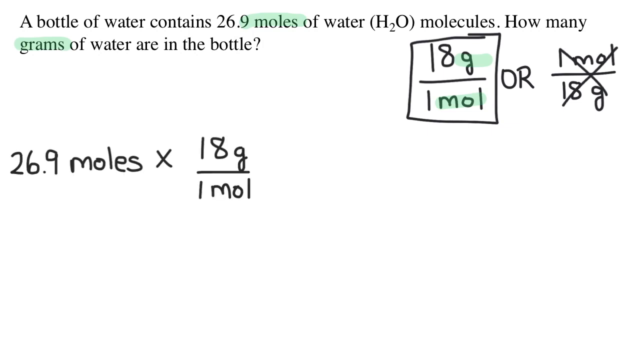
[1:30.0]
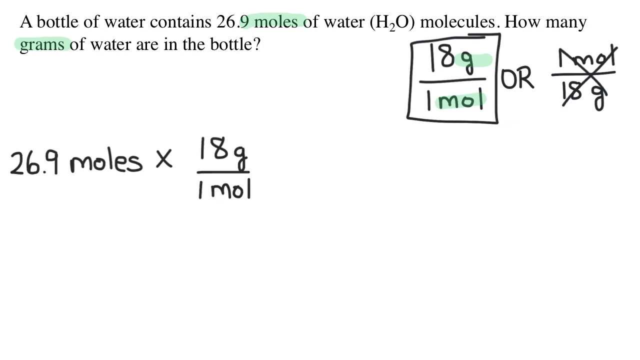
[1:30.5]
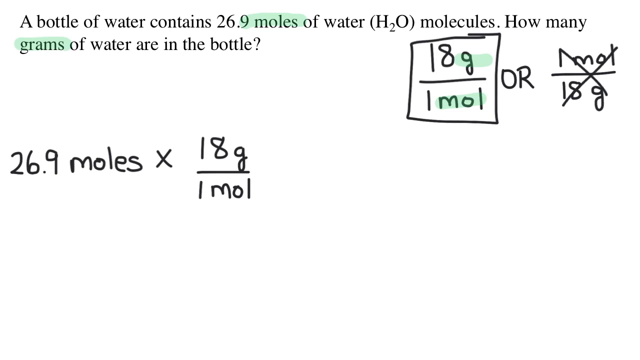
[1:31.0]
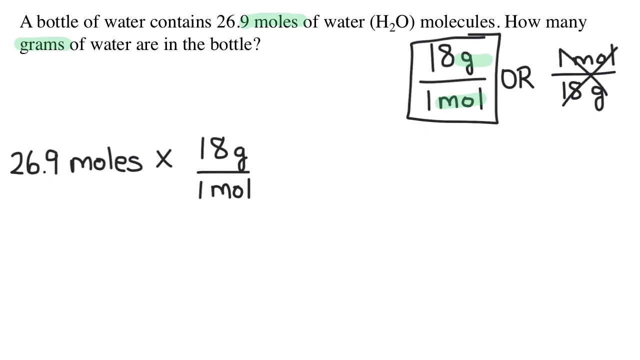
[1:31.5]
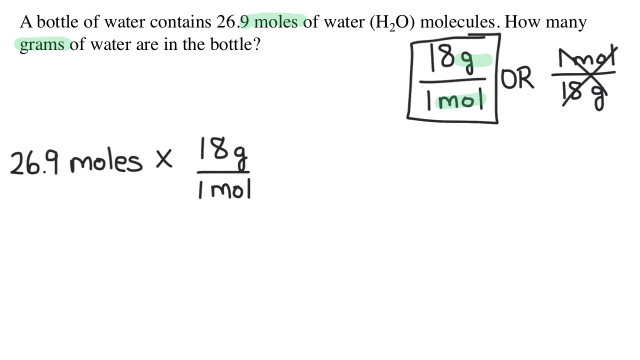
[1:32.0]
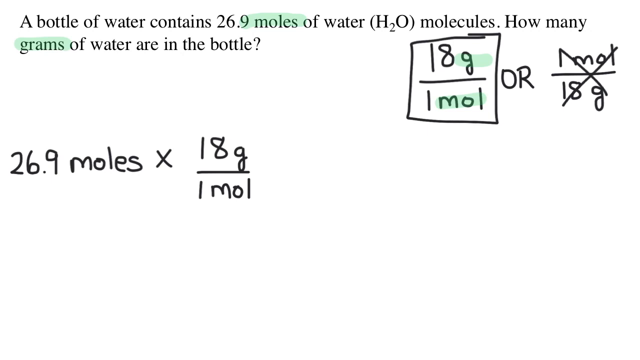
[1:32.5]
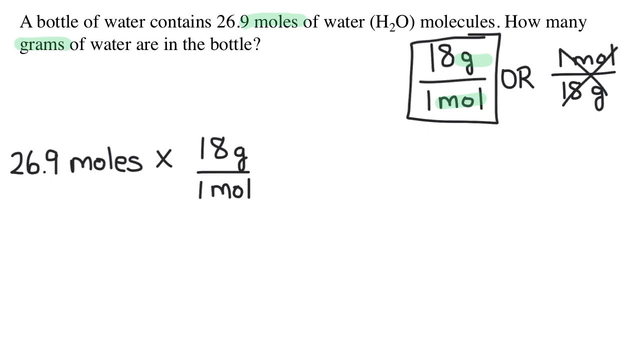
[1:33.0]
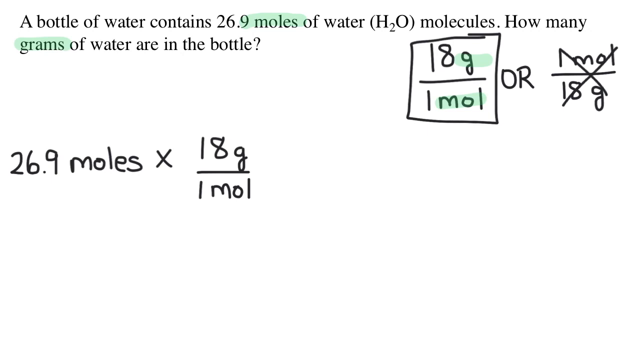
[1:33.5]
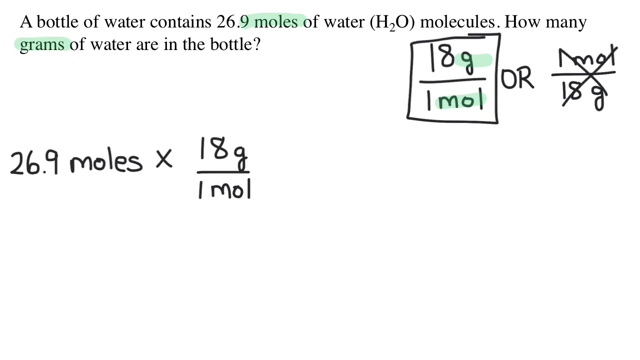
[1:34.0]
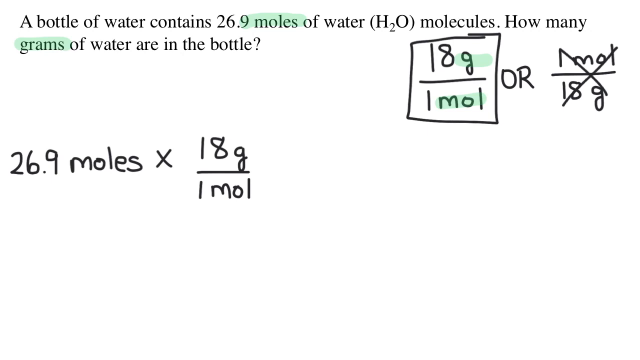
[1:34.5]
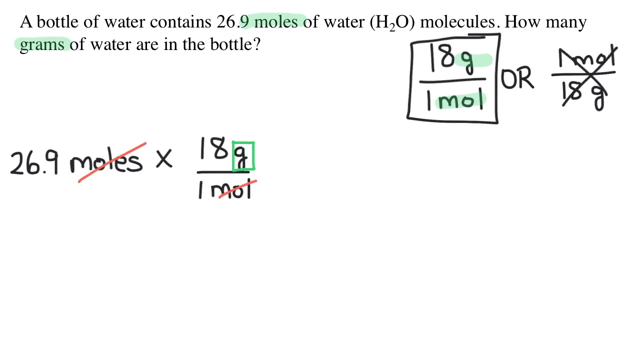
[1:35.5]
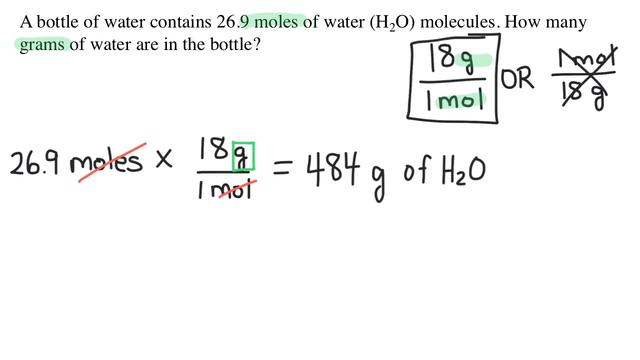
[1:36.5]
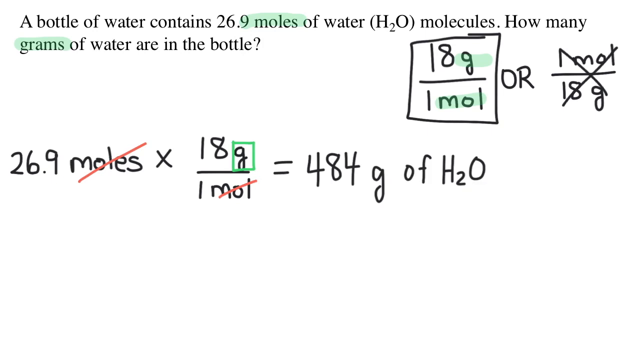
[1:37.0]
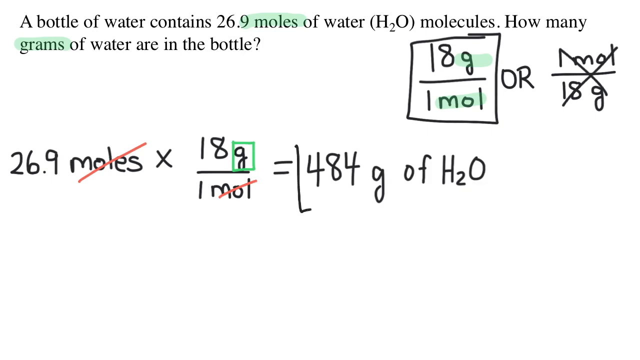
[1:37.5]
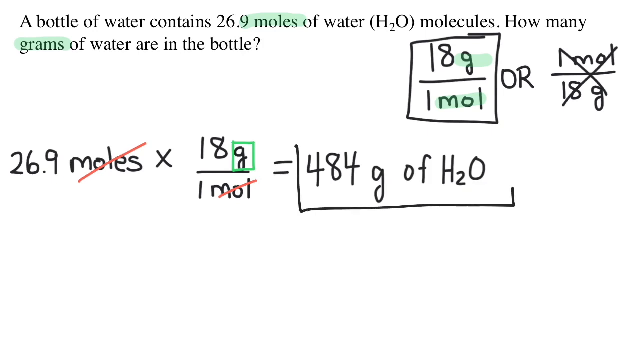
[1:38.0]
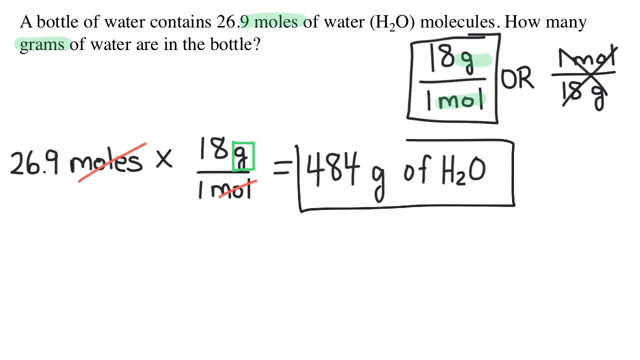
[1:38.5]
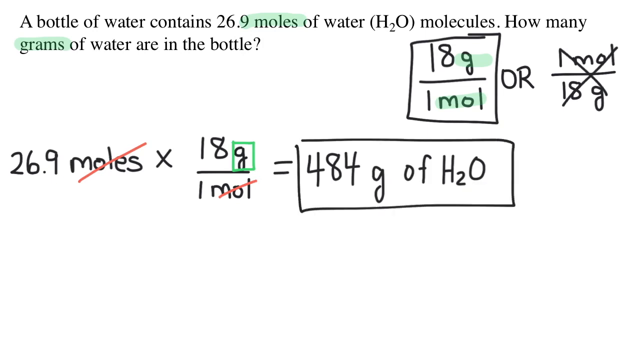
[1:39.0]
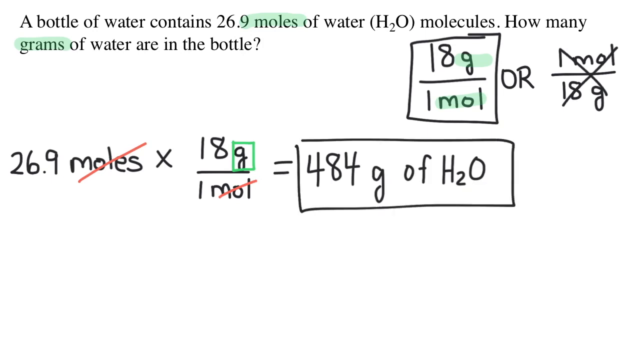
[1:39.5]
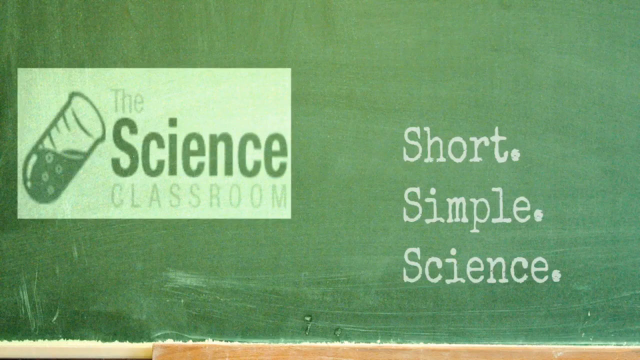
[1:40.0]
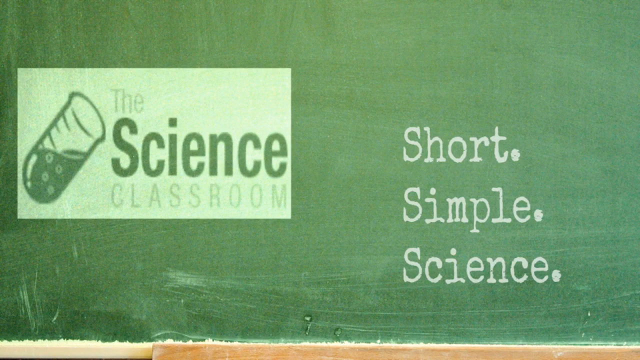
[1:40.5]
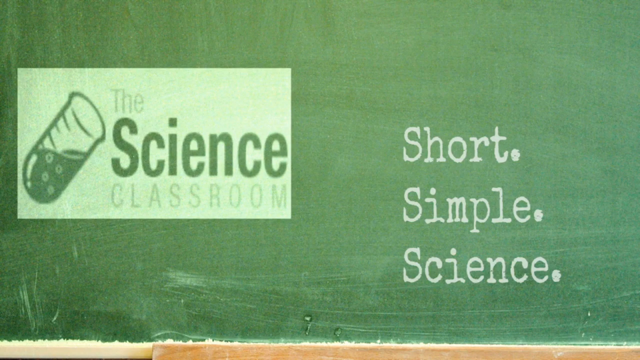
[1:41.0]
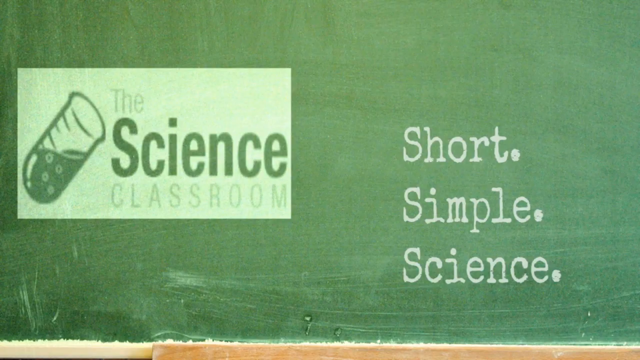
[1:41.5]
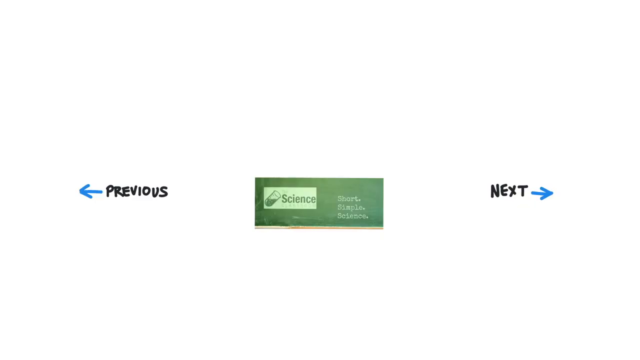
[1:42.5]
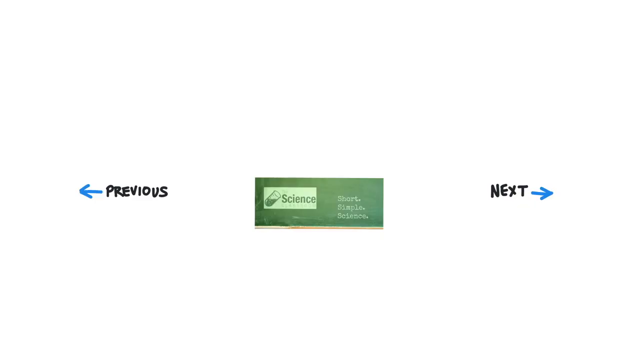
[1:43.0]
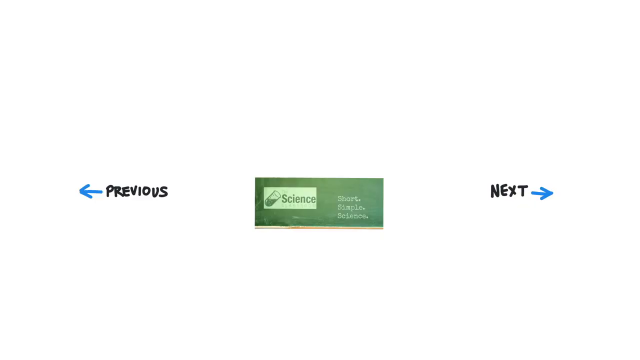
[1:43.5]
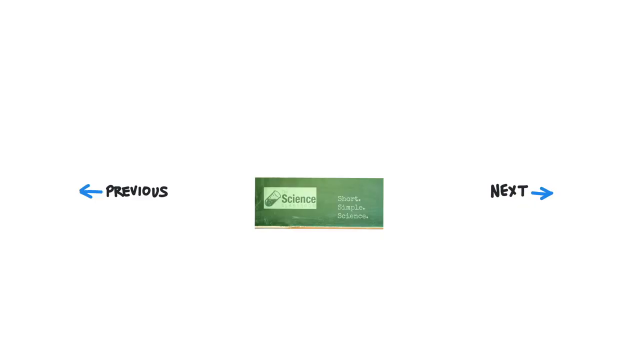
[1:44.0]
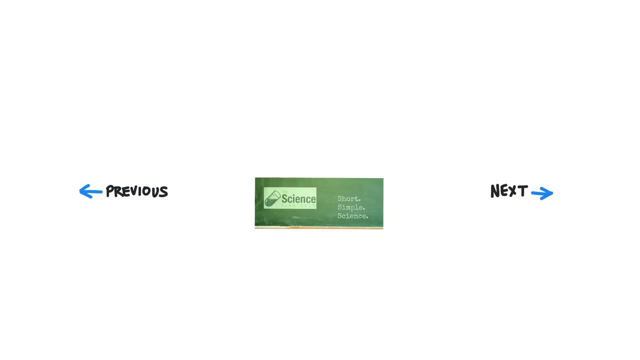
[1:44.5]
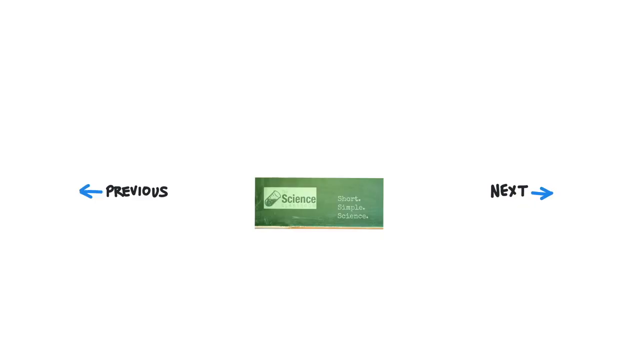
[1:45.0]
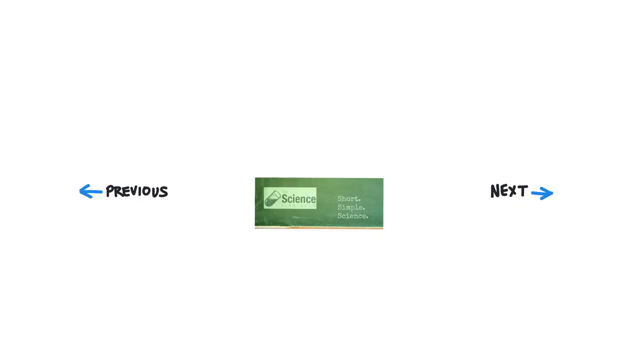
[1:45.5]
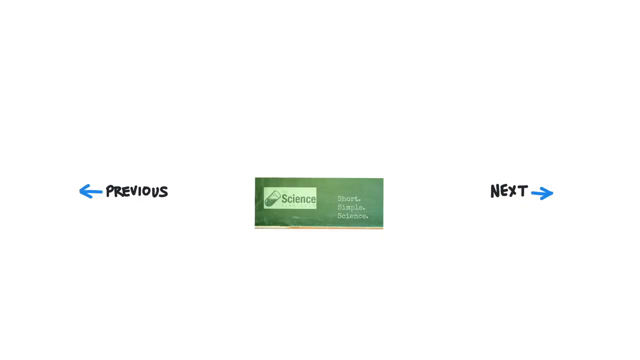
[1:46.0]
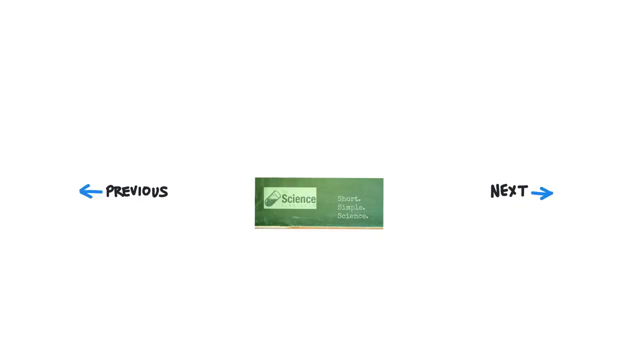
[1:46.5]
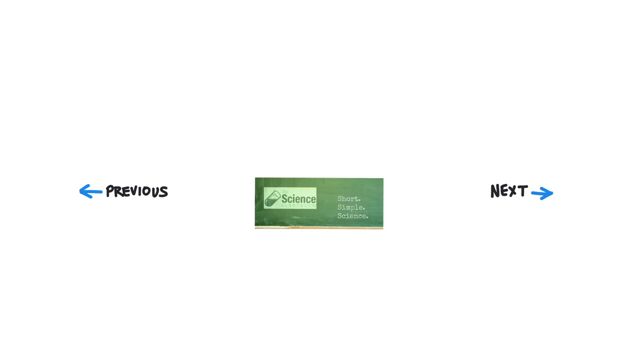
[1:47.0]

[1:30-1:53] The task is on screen: "A bottle of water contains 26.9 moles of water, H2O molecules. How many grams of water are in the bottle?" Next to it are the formula 18 g per mol and the new formula 26.9 moles to 18 g per mol. The moles and mol cancel each other out, leaving a simple formula, 26.9 to 18 g, and the calculated answer is 484 g of H2O. A slide follows advertising the video maker, Science Classroom, "short, simple science," on a green background. The final slide apparently offers a choice between the previous lesson and the next lesson.